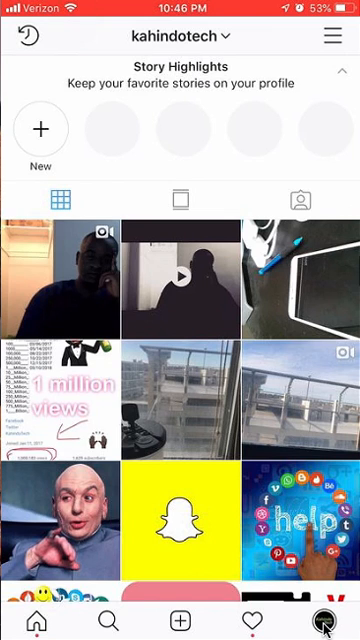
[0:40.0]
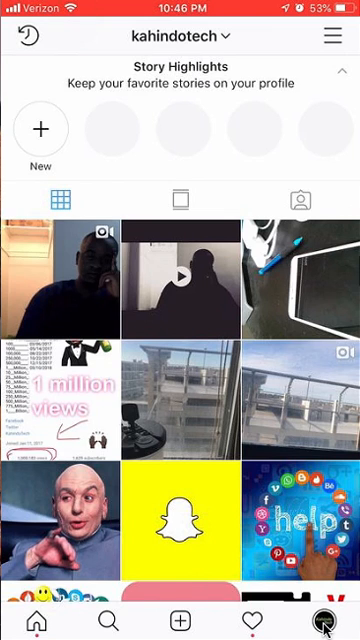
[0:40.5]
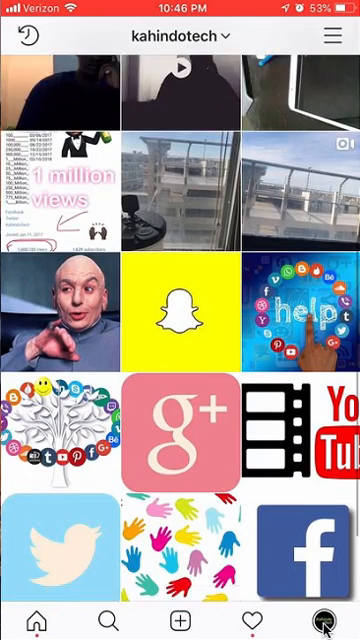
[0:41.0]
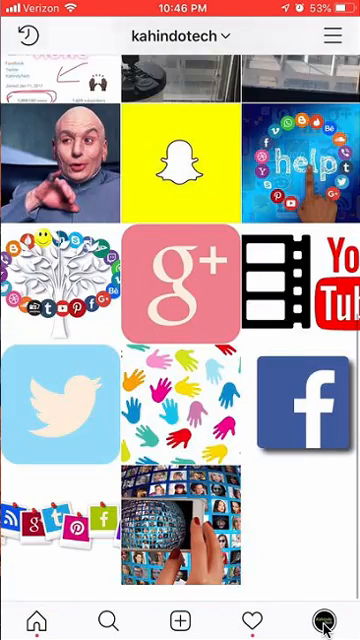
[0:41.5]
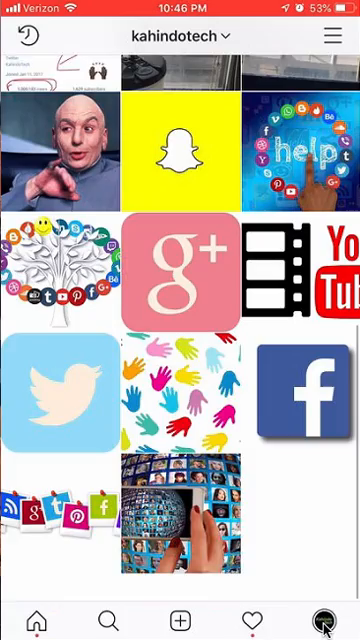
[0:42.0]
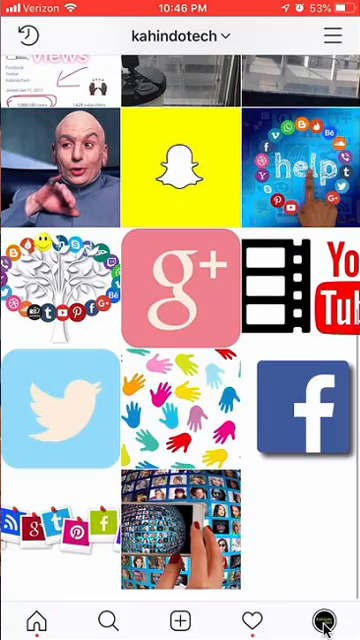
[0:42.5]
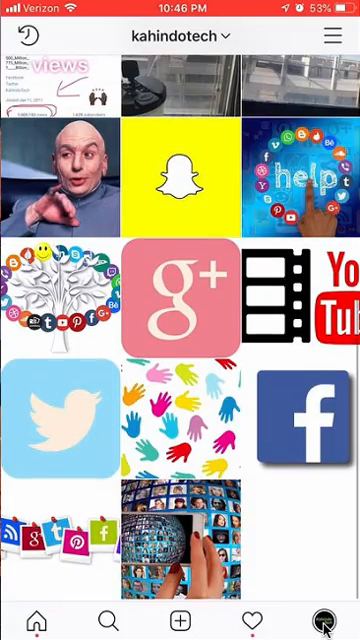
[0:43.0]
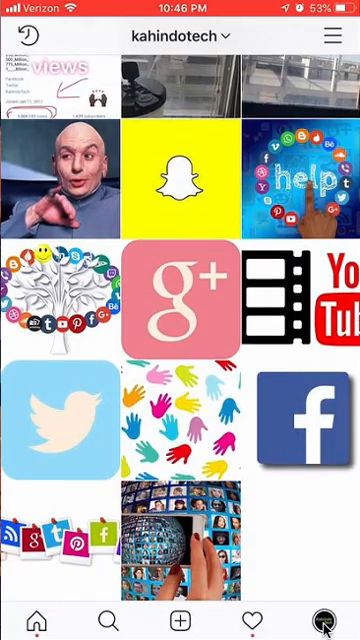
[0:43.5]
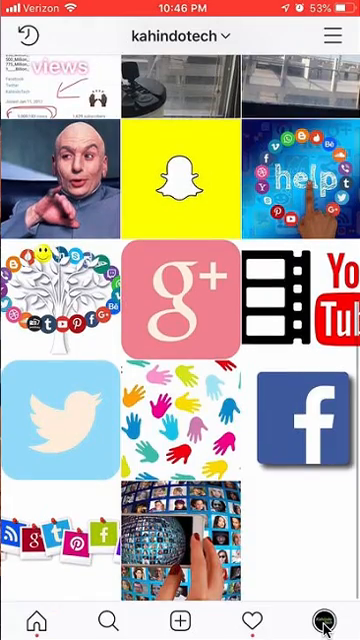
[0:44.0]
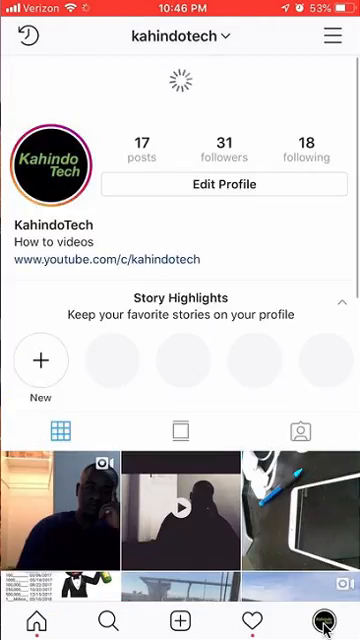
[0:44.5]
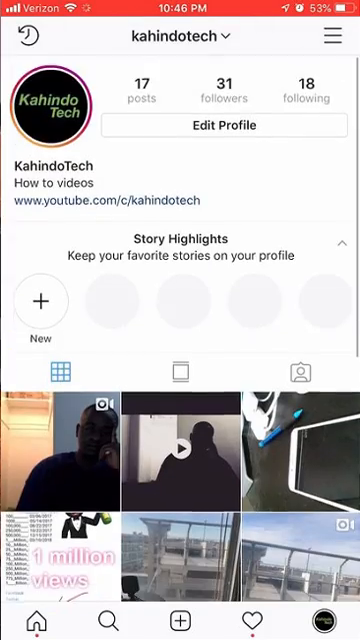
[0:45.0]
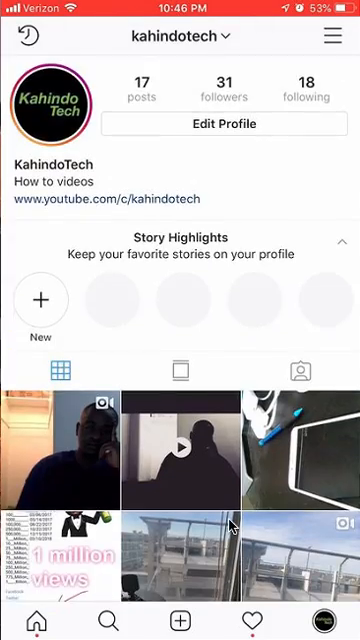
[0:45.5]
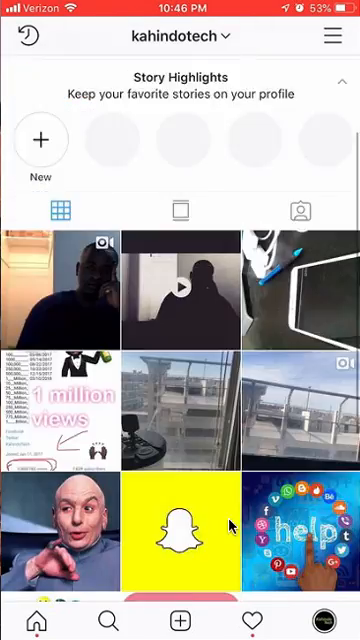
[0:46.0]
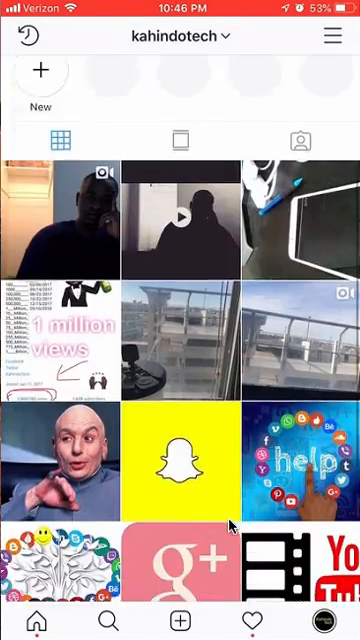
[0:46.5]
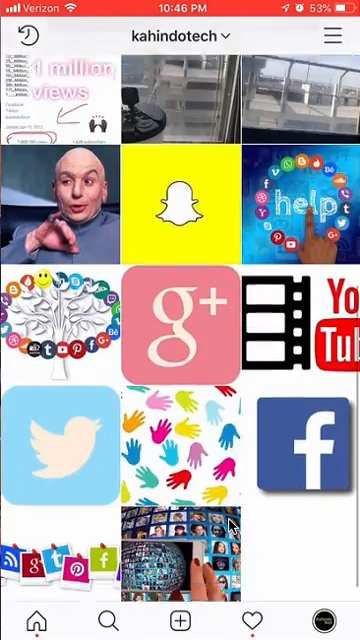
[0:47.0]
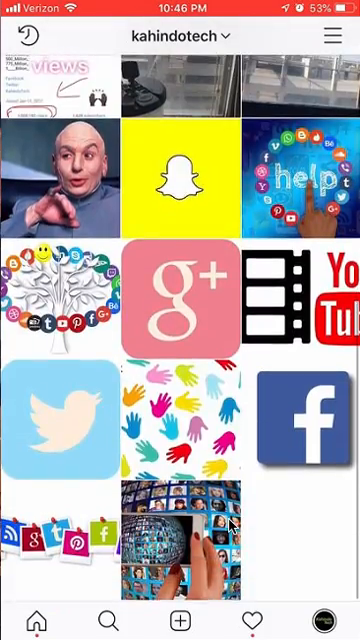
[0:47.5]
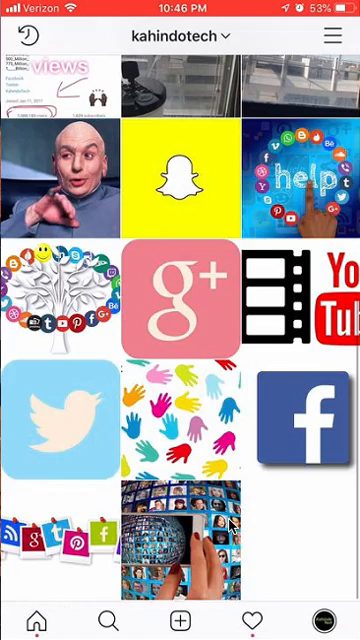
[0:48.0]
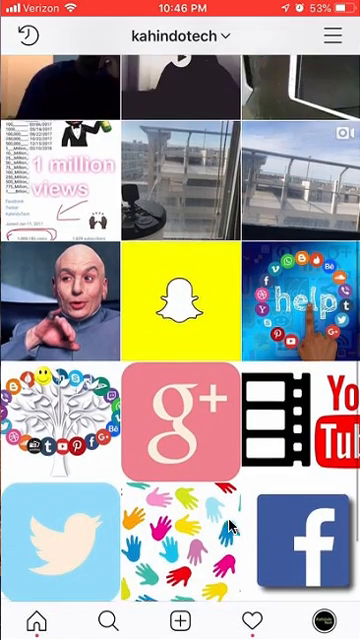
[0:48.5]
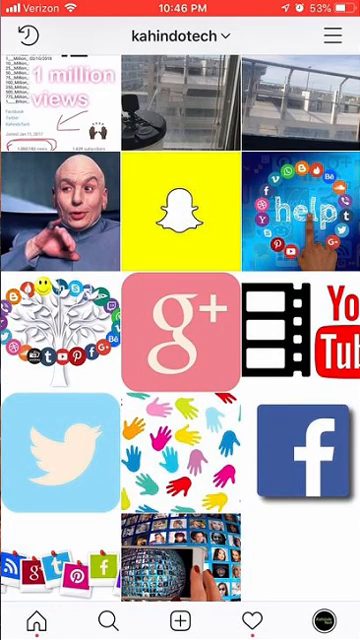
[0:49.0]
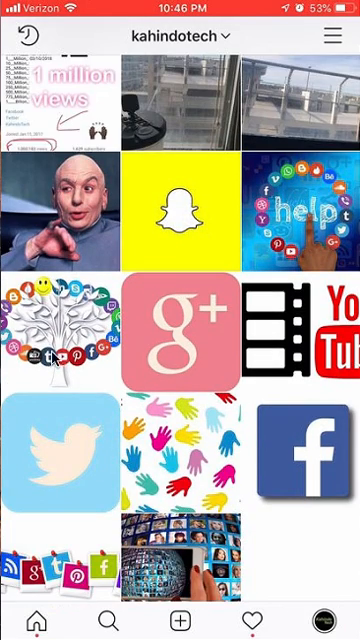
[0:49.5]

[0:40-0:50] An Instagram page appears on the screen of a mobile device. Across the very top, on a red horizontal bar, are the Verizon logo on the left, the time 10.46 PM in the middle, and a battery level of 53% on the right. Below the red bar, the name of the Instagram page is displayed as Kahindotech, and below that the text reads "Story highlights. Keep your favorite stories on your profile." A collage of images and videos follows, arranged in three rows and three columns. The screen scrolls down, revealing an additional three rows and three columns of images. The images and videos include the Facebook logo, the Google logo, the YouTube logo, and thumbnails of some videos. The screen scrolls back up and then down again, as if the user is searching for something, and a mouse pointer moves up and down the screen as the scrolling continues.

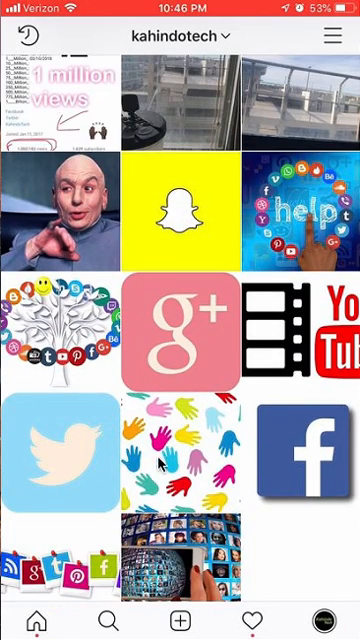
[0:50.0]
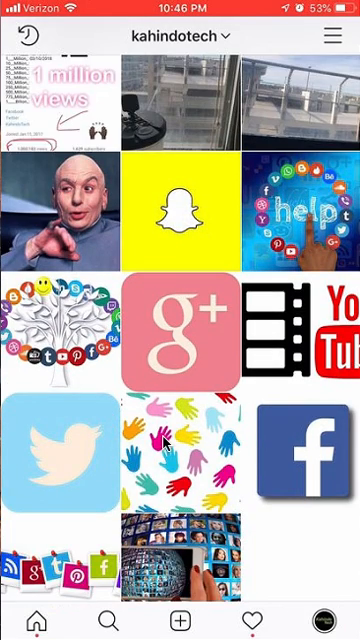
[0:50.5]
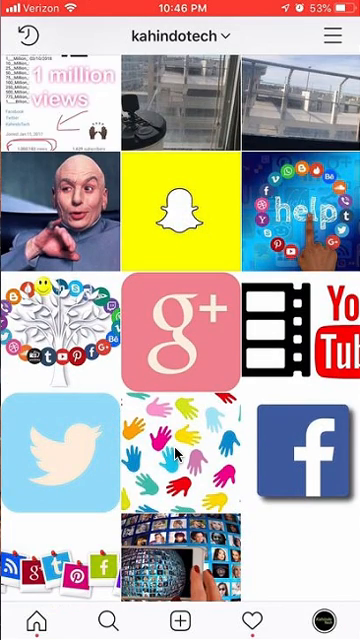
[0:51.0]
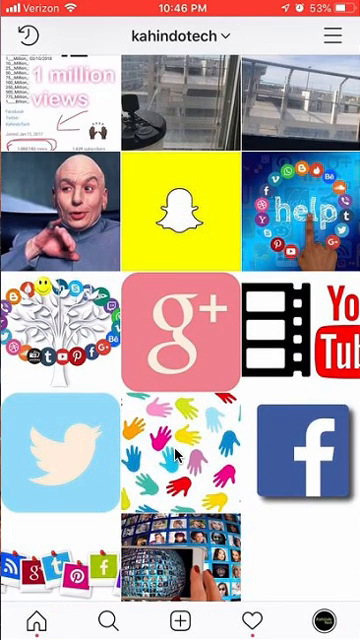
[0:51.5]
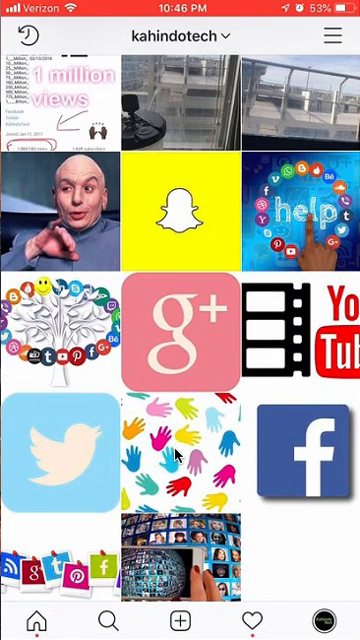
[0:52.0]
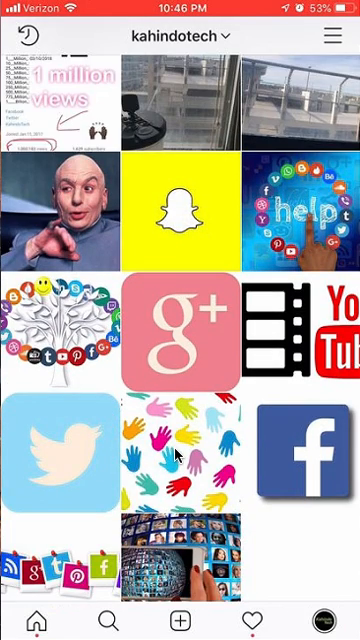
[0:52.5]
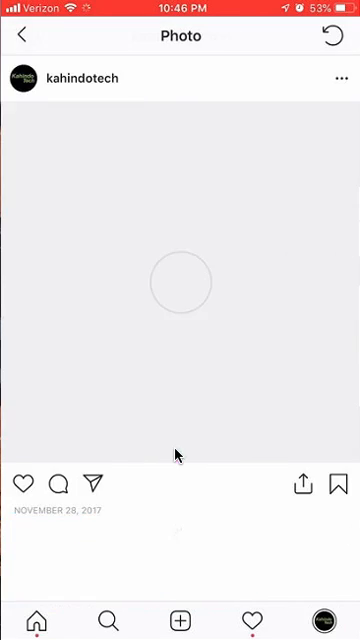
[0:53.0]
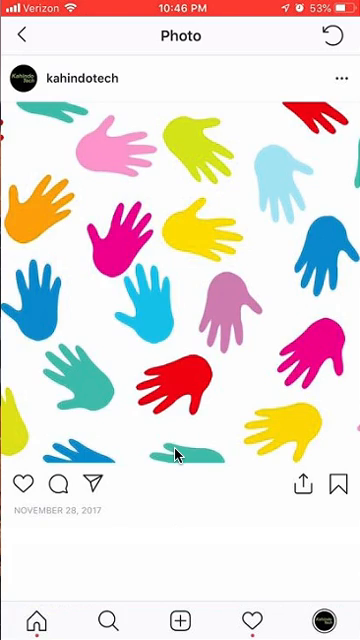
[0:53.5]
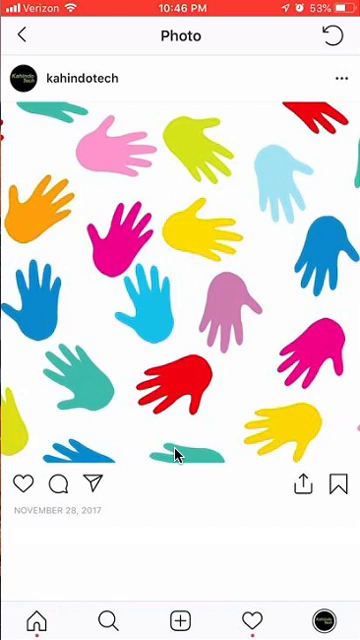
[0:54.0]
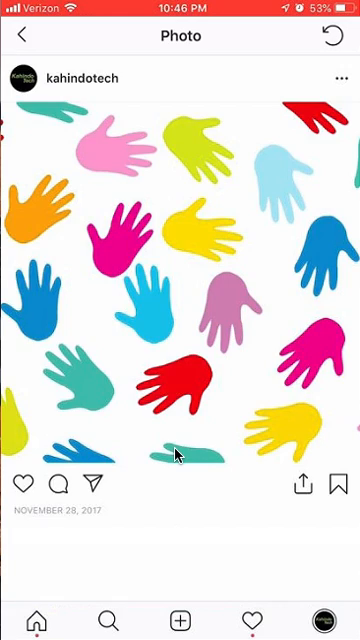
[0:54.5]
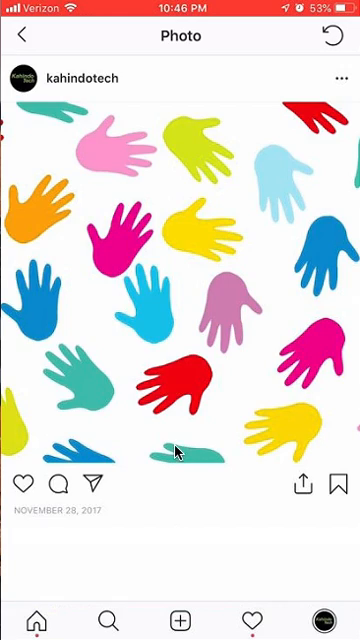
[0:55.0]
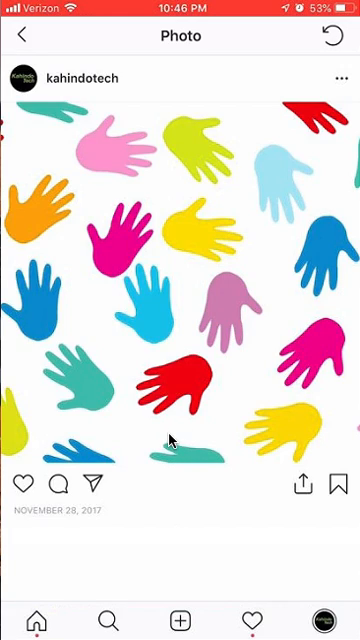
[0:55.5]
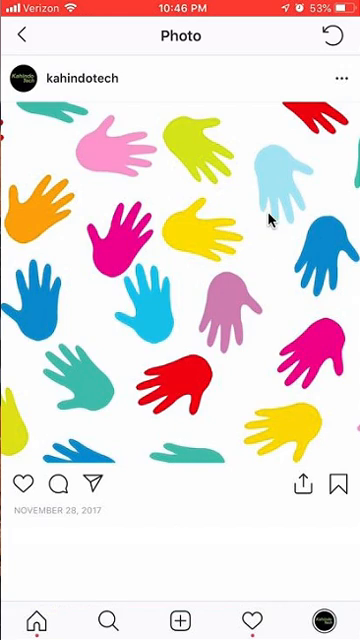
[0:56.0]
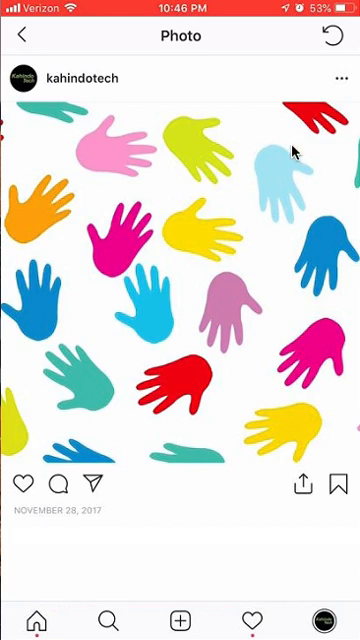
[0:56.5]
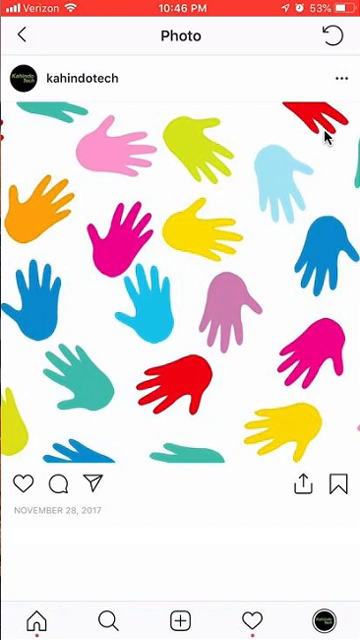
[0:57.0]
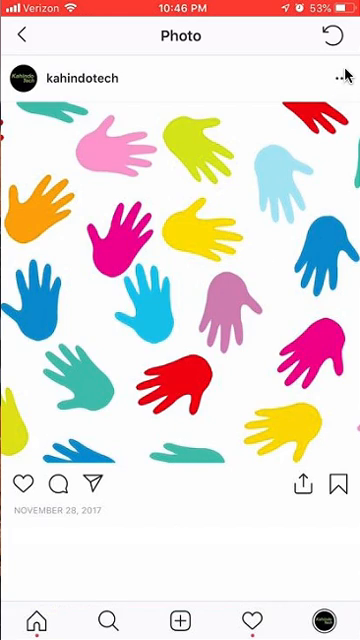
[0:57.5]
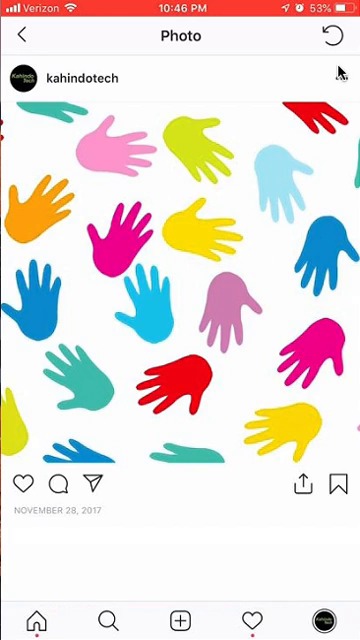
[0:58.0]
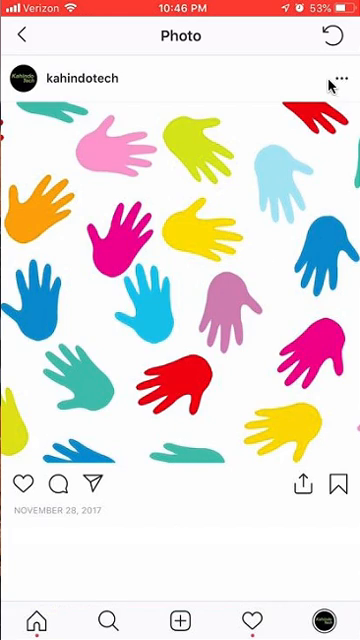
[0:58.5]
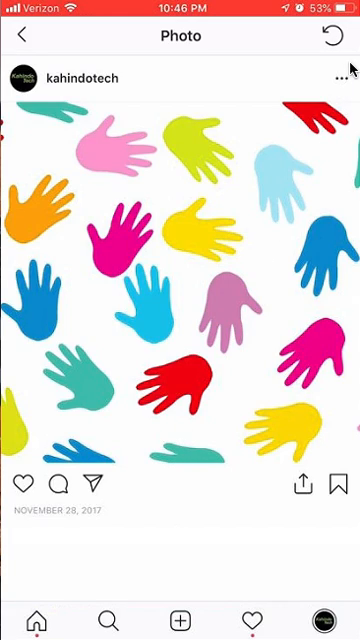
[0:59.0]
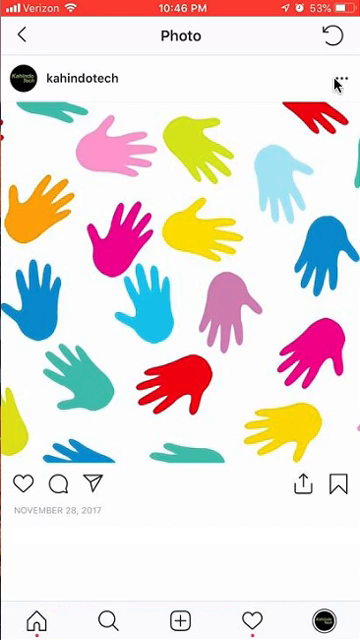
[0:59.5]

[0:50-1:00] An Instagram page is shown on a mobile device screen. At the very top is the red horizontal bar with the Verizon logo on the left, the time 10.46 PM in the middle, and a battery level of 53% on the right along with a battery icon and an alarm icon. Below the red bar is the page name, kahindotech. Below that are thumbnails of images and videos arranged in three columns and several rows, including the Facebook logo, the Twitter logo, an image covered with many colorful human palms, and other images. The image with the colorful palms is selected and fills up the screen. A black mouse pointer then moves upwards and circles the three dots at the upper right of the screen, above the image.